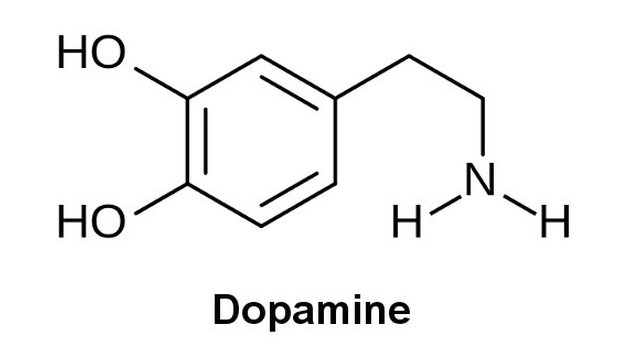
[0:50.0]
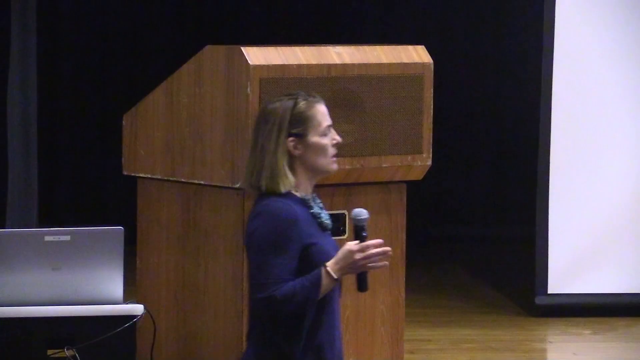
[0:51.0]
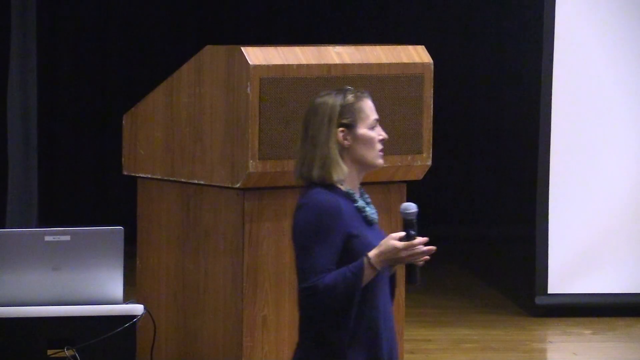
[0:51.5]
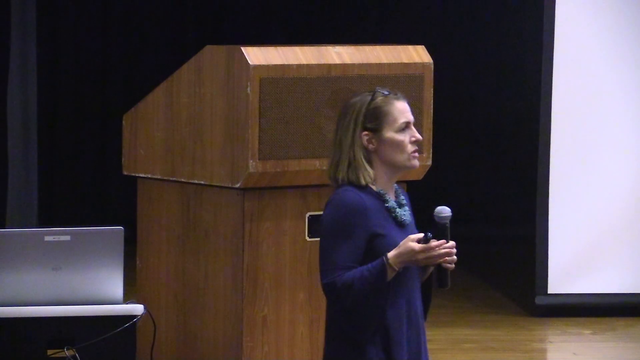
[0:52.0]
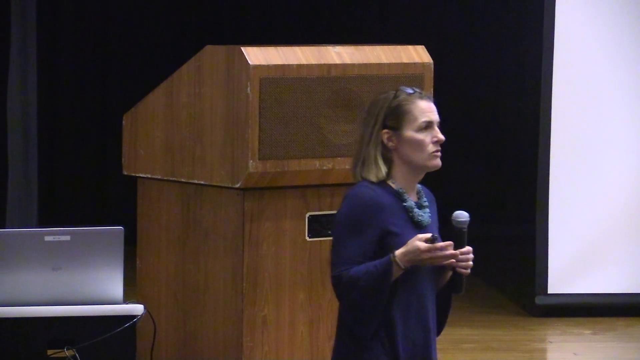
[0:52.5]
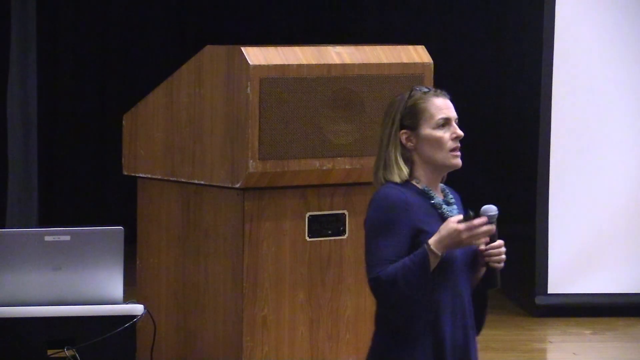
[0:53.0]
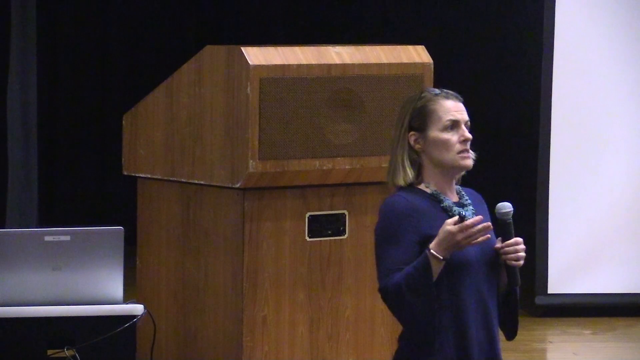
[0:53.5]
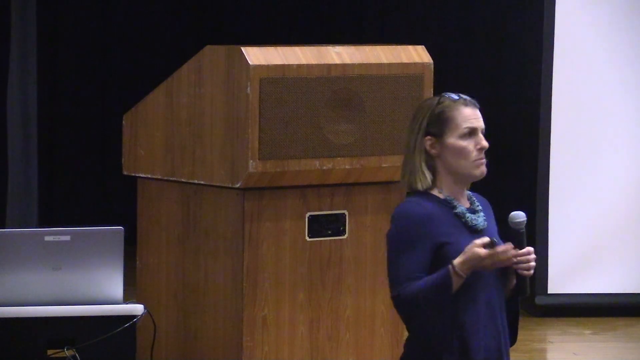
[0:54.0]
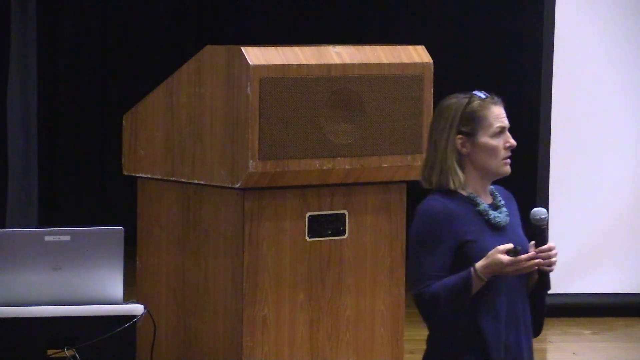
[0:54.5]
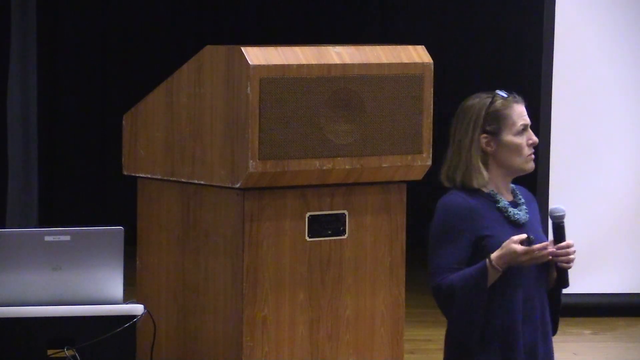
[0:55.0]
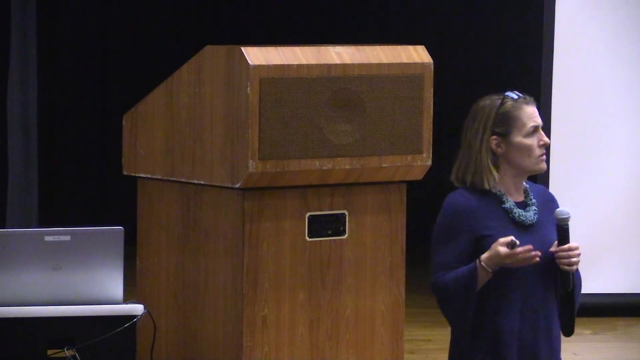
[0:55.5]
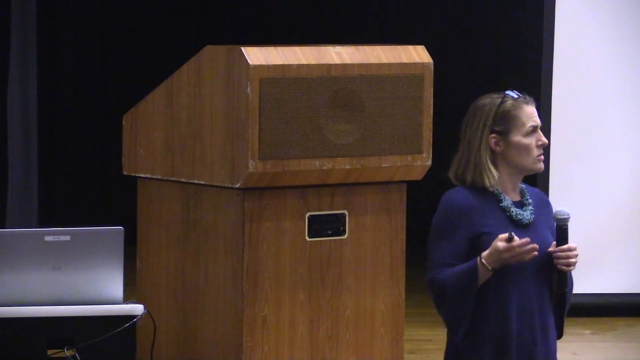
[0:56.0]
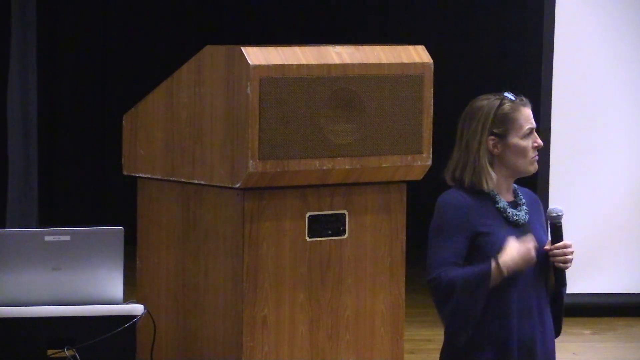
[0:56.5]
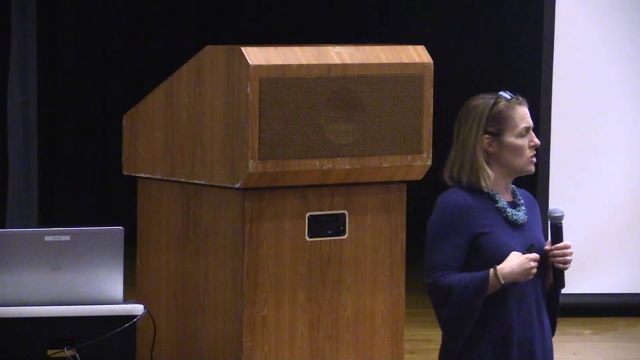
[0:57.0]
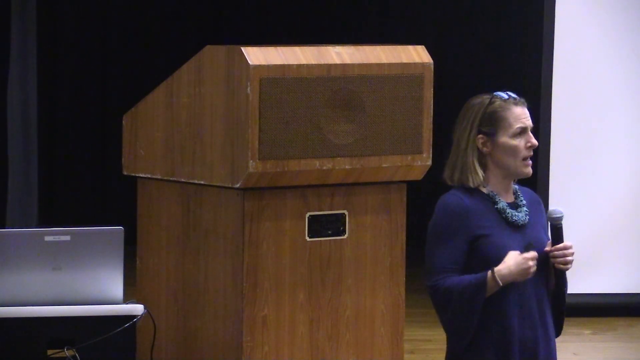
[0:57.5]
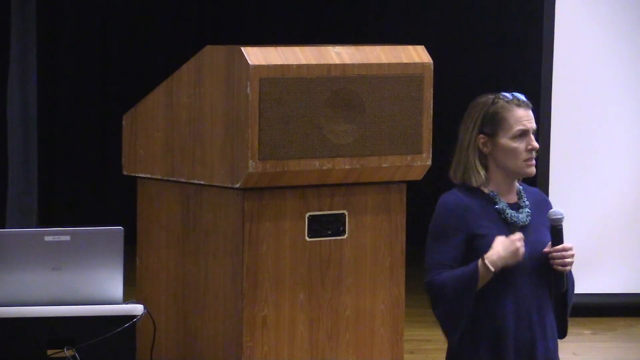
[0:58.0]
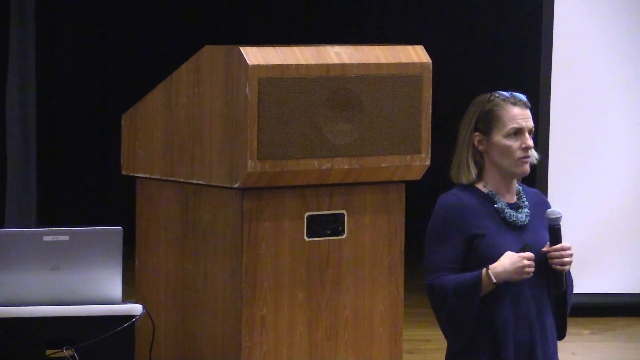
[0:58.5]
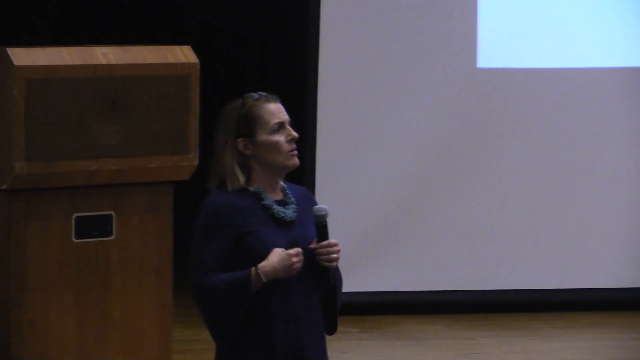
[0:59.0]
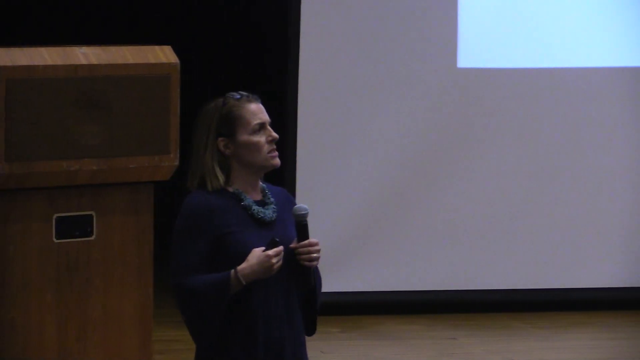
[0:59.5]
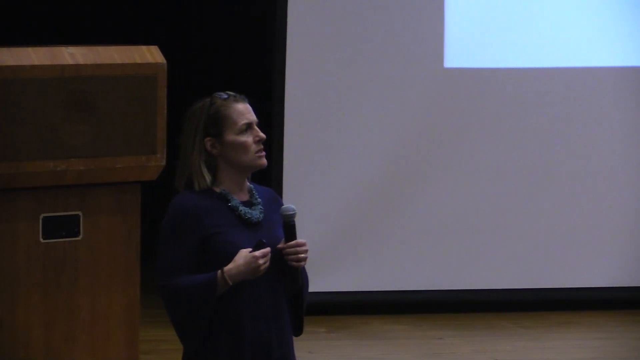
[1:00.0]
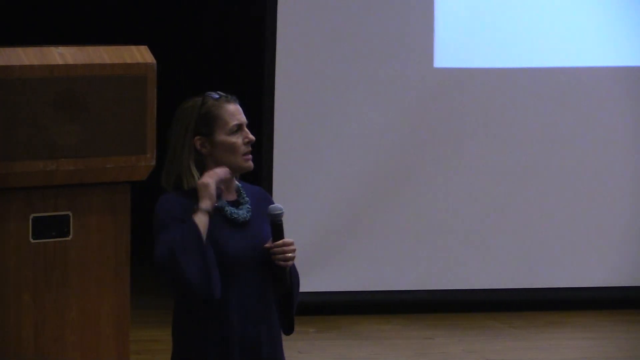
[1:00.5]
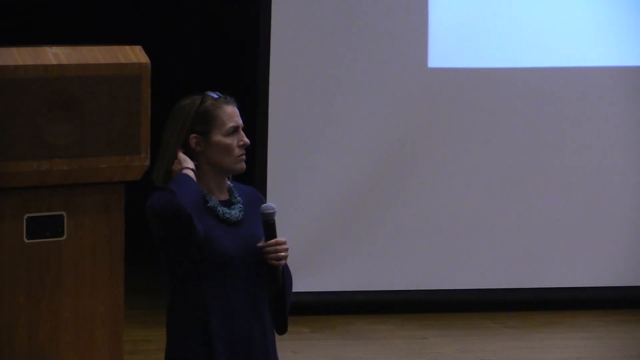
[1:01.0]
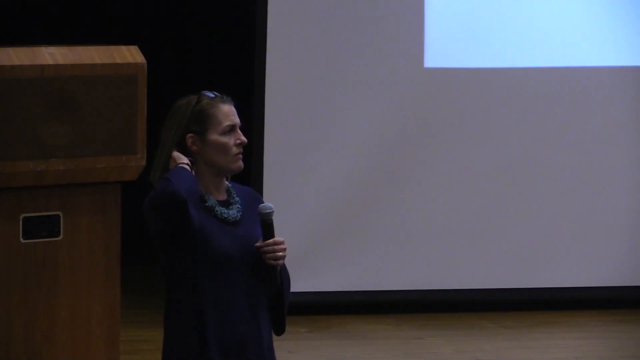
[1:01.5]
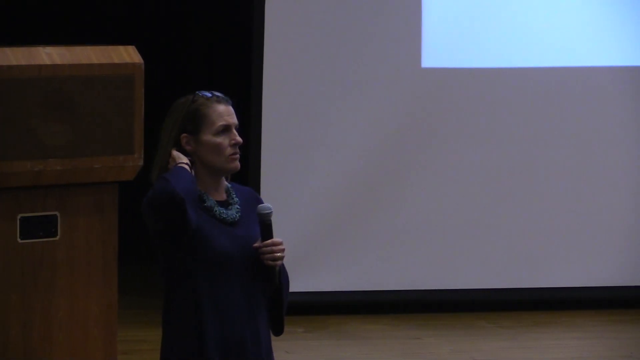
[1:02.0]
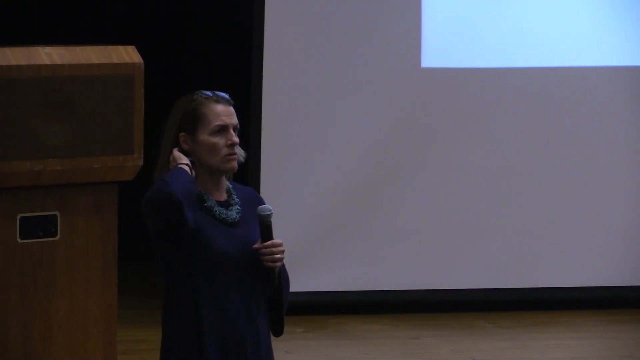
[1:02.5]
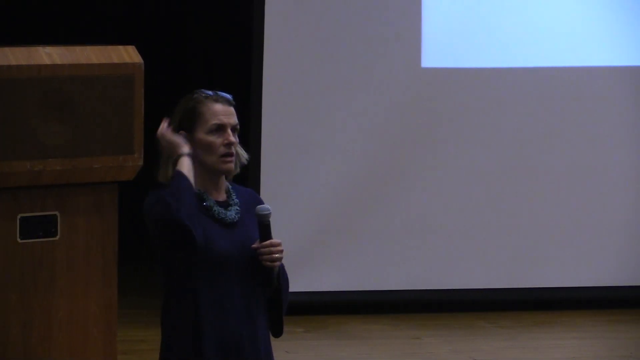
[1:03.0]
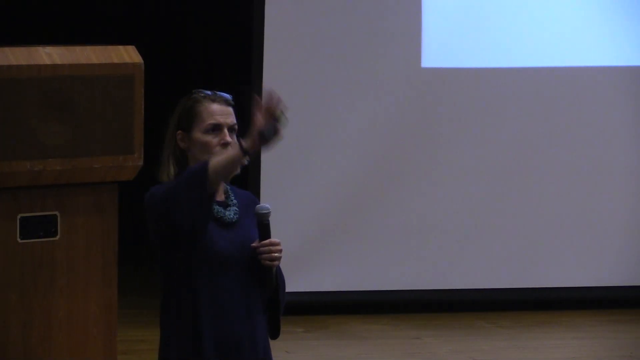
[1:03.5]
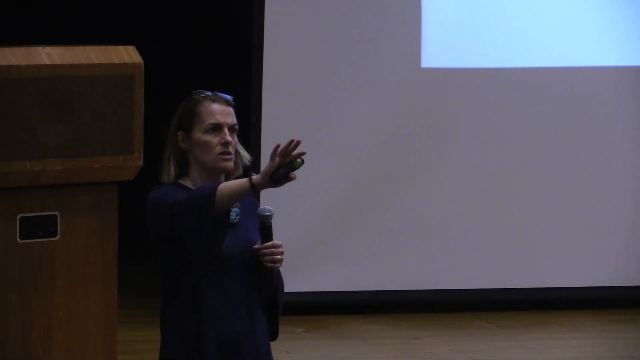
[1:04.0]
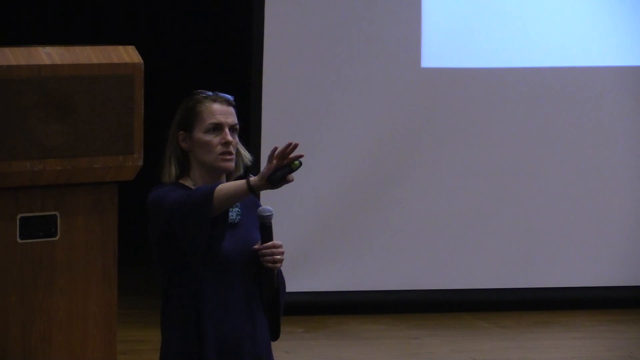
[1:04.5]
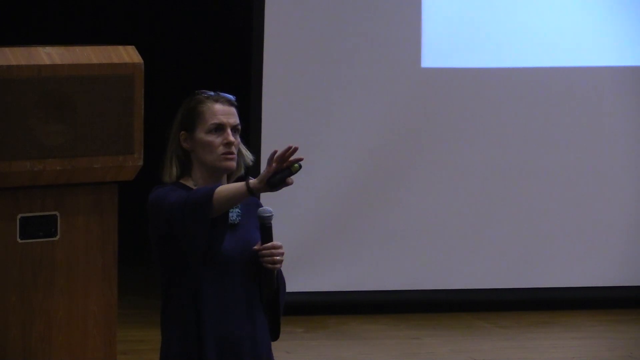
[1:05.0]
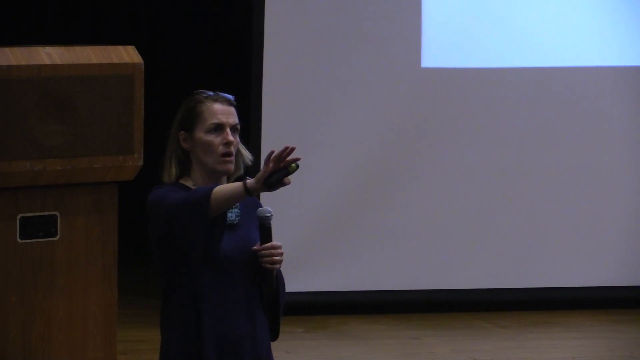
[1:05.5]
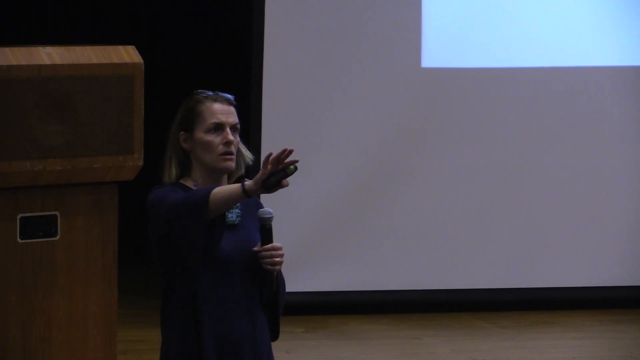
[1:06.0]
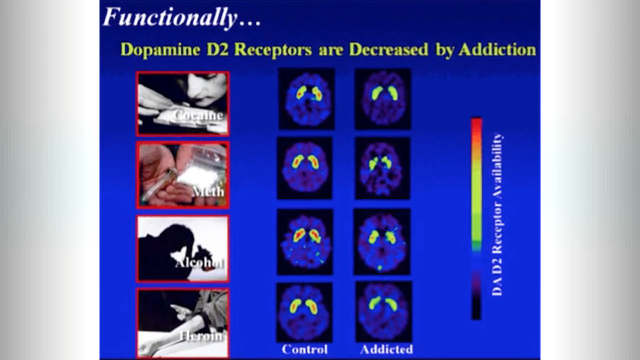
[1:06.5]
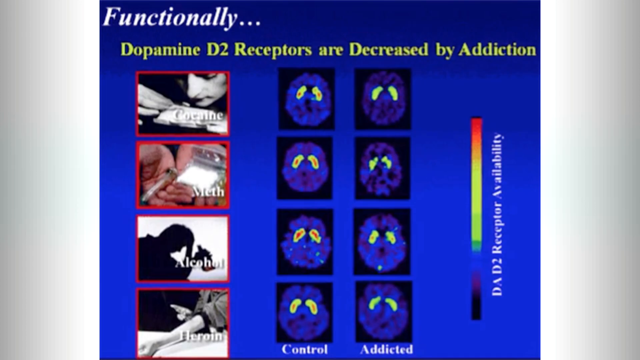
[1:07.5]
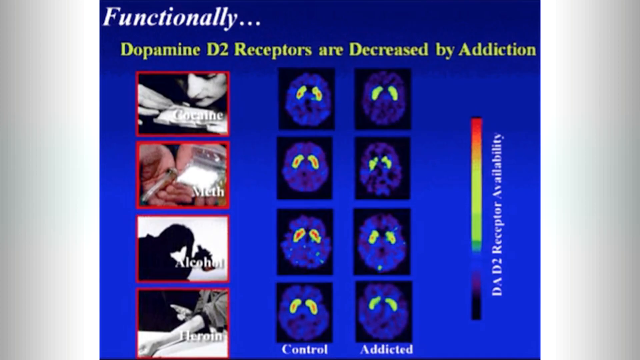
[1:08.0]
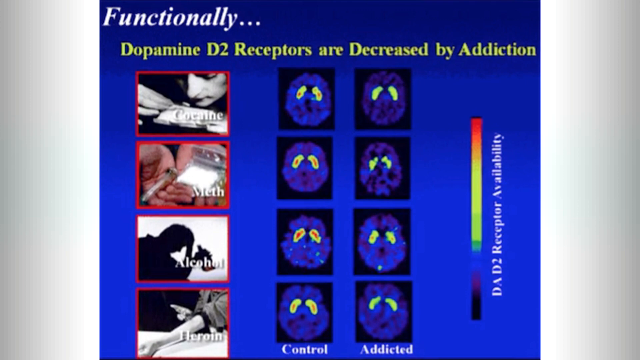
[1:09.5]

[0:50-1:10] The woman gives her speech at the medical seminar. She wears a blue dress and walks back and forth across the stage, holding the microphone in her left hand. She has short blonde hair, white skin, and glasses on top of her head. The video cuts to a blue graphic that says "functionally, dopamine D2 receptors are decreased by addiction." On the left side are four squares showing images of drug use, such as cocaine, meth and alcohol; the last one is hard to make out. Next to them are two columns of MRI images of the brain, apparently under the effect of these substances, four rows deep in each column. A color bar on the right side of the image indicates the intensity of the affected brain area.